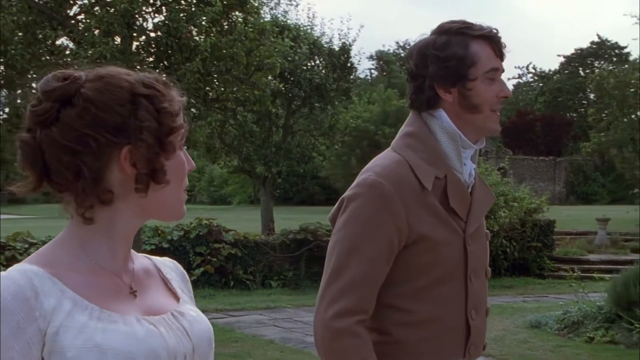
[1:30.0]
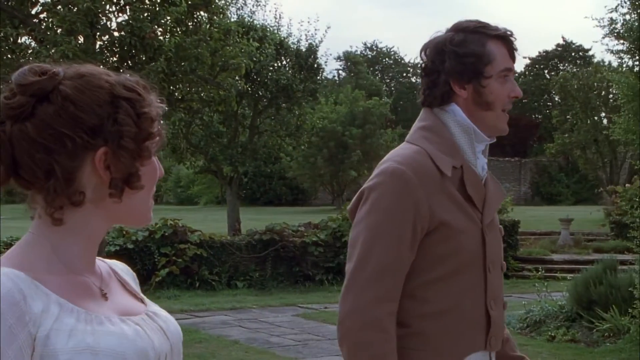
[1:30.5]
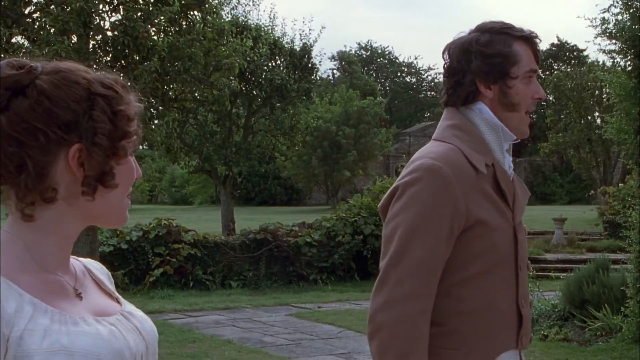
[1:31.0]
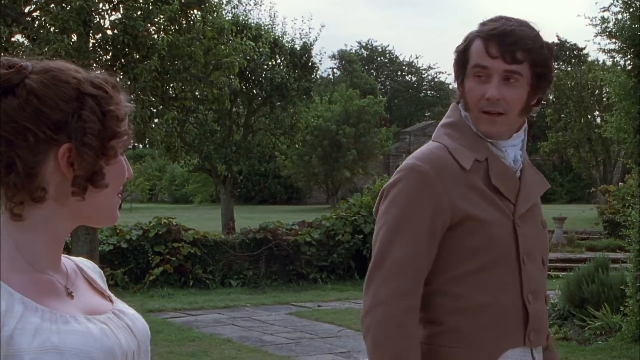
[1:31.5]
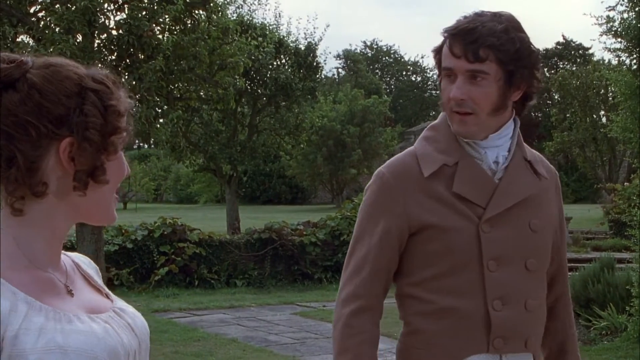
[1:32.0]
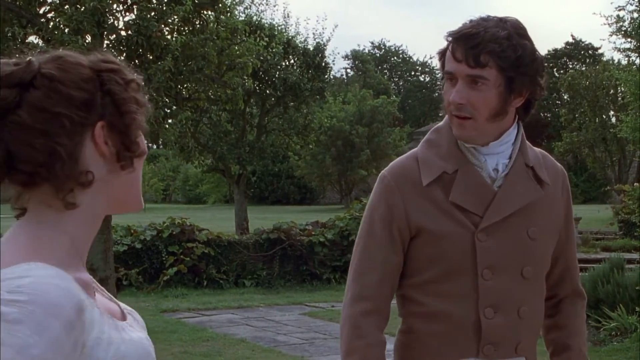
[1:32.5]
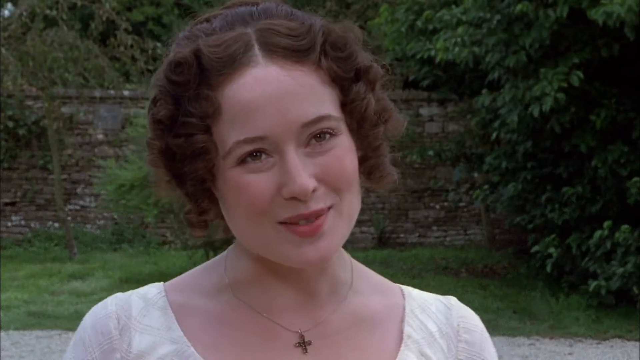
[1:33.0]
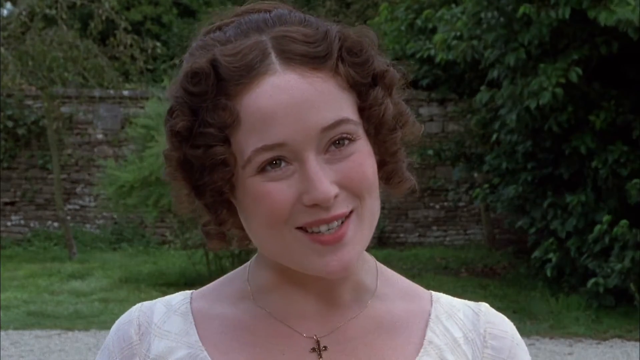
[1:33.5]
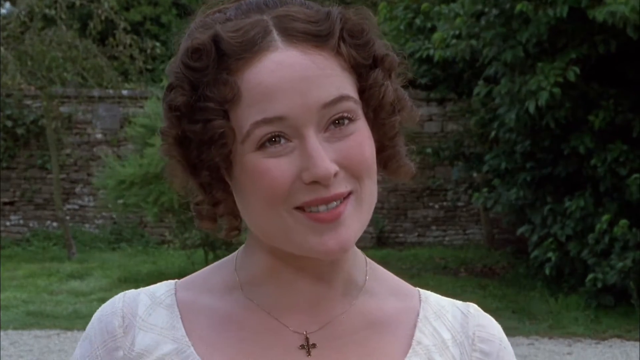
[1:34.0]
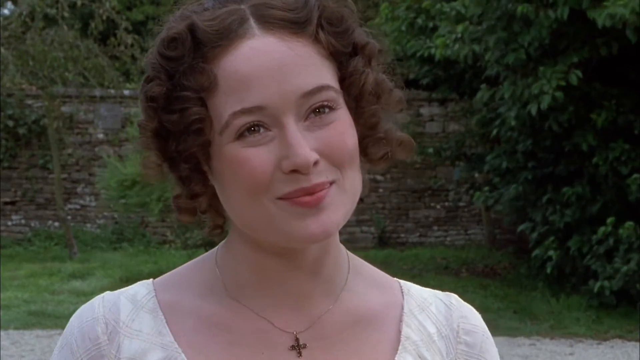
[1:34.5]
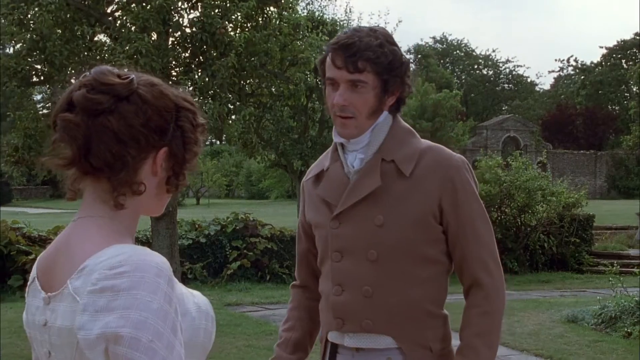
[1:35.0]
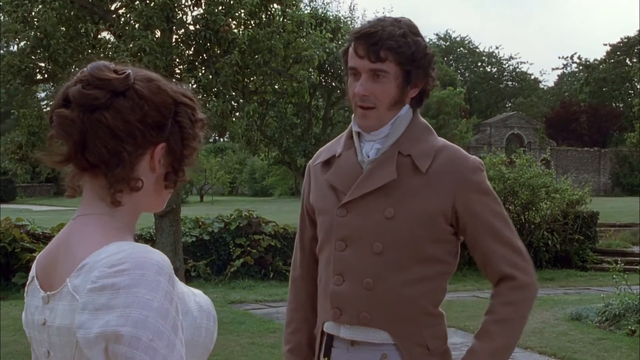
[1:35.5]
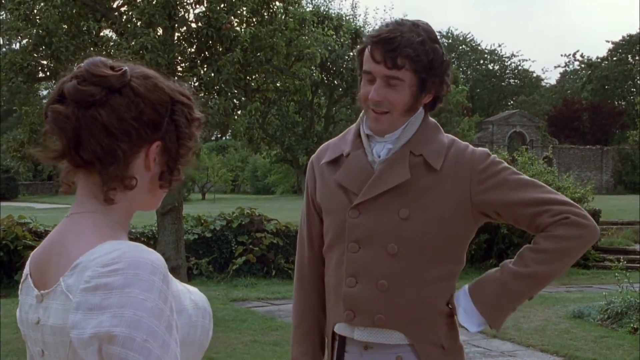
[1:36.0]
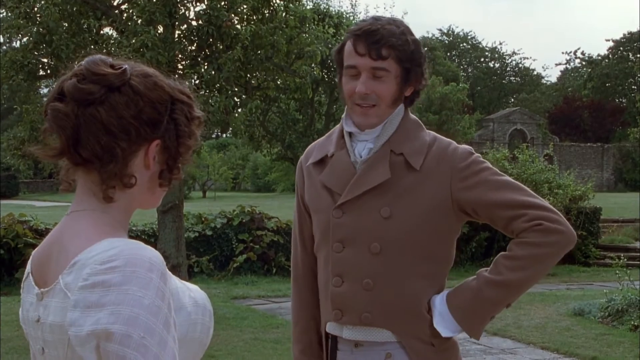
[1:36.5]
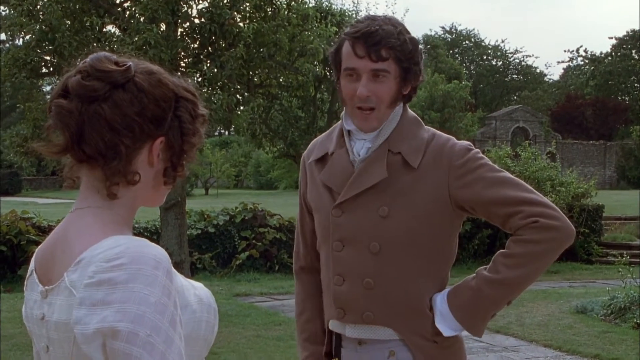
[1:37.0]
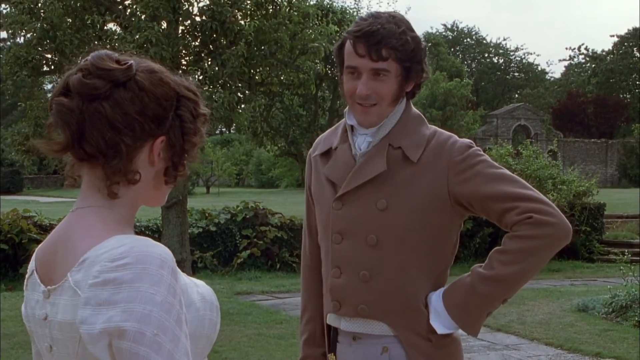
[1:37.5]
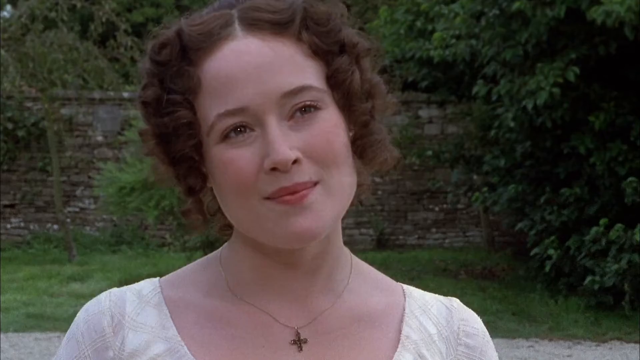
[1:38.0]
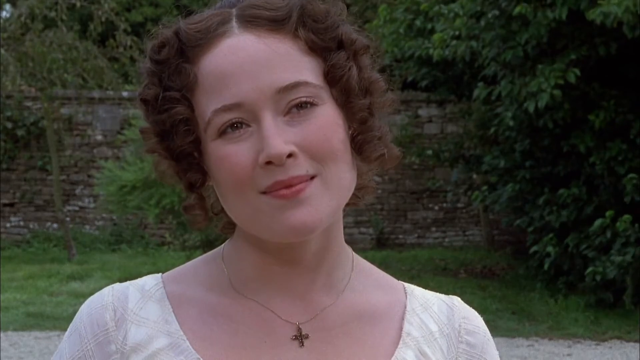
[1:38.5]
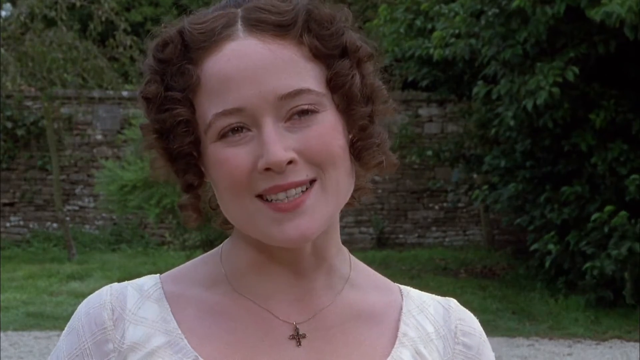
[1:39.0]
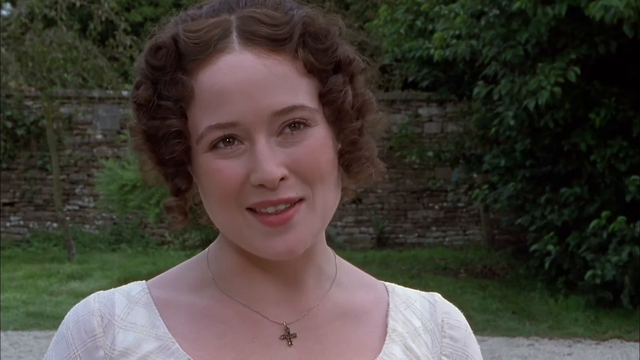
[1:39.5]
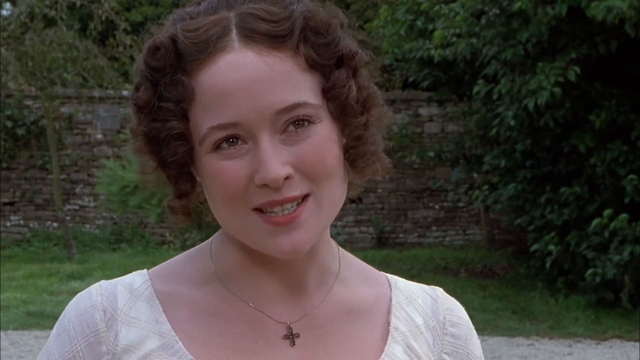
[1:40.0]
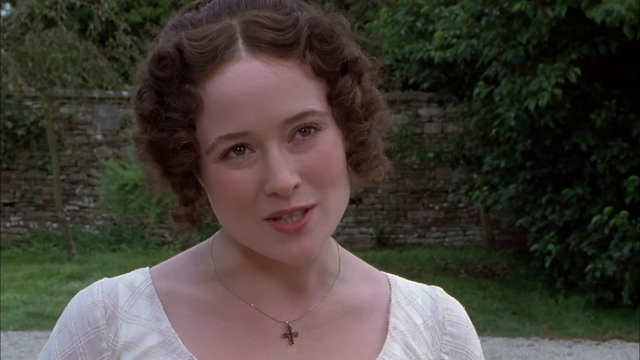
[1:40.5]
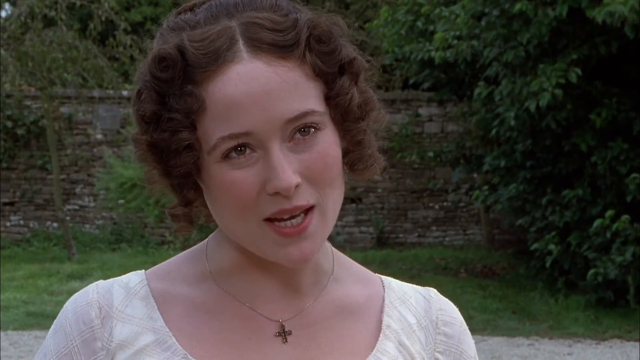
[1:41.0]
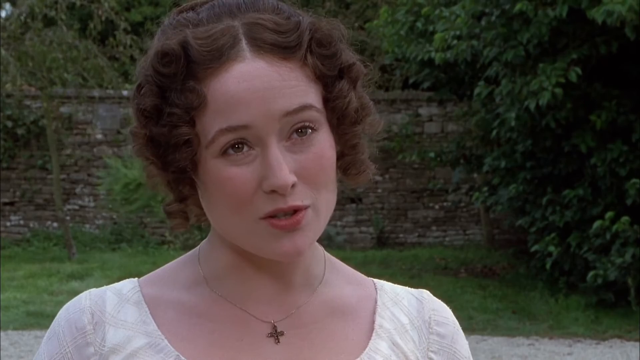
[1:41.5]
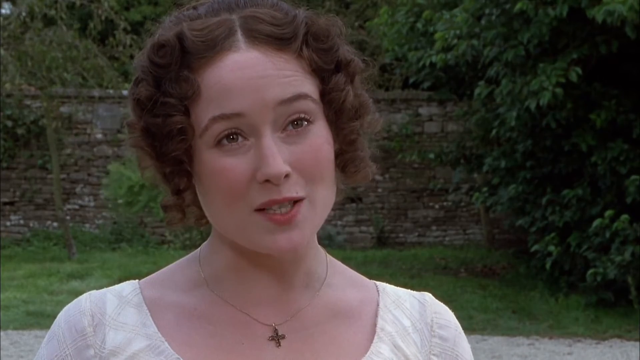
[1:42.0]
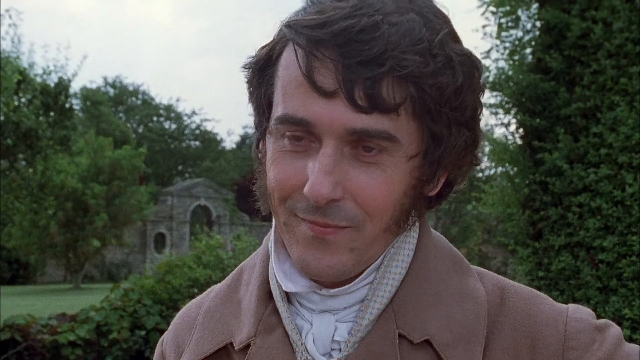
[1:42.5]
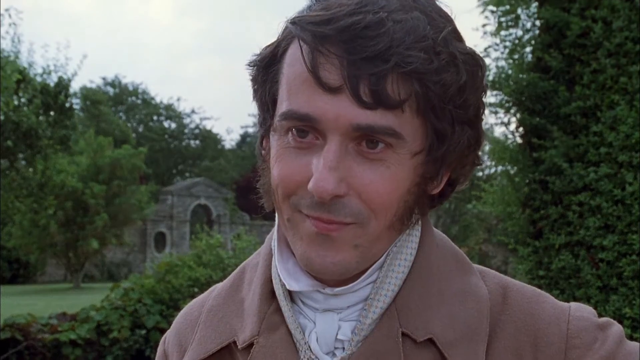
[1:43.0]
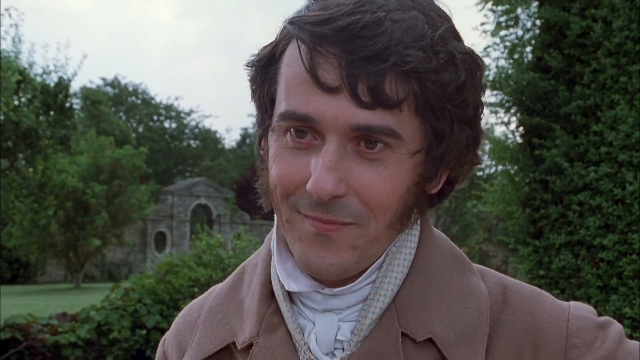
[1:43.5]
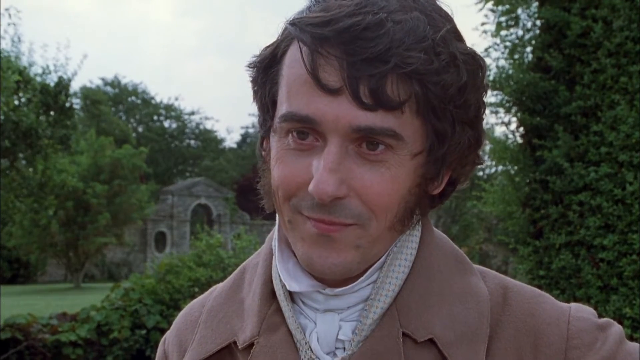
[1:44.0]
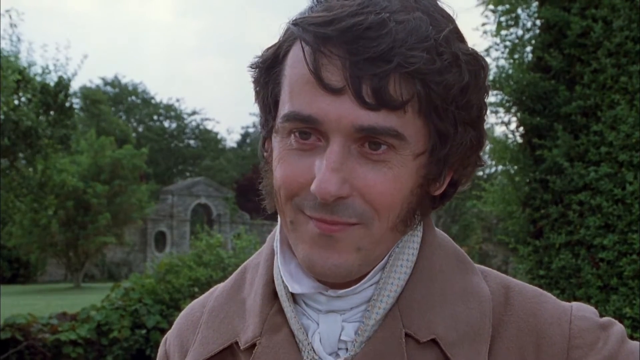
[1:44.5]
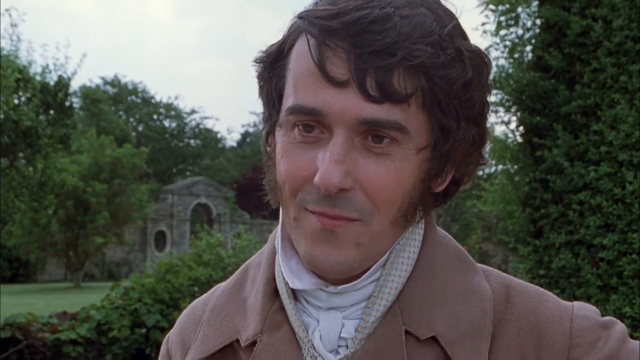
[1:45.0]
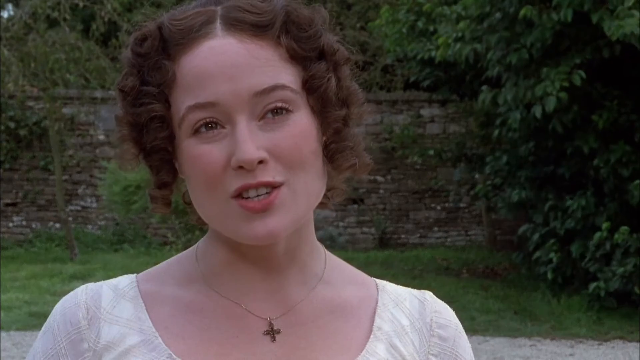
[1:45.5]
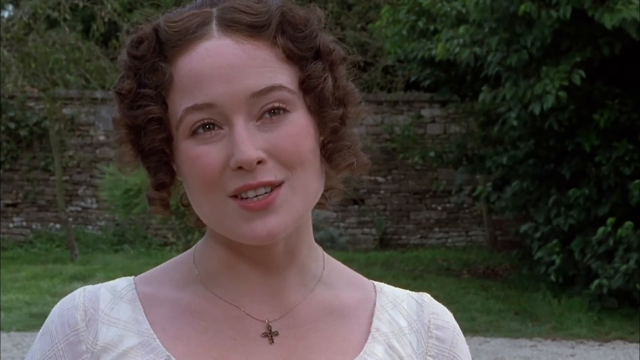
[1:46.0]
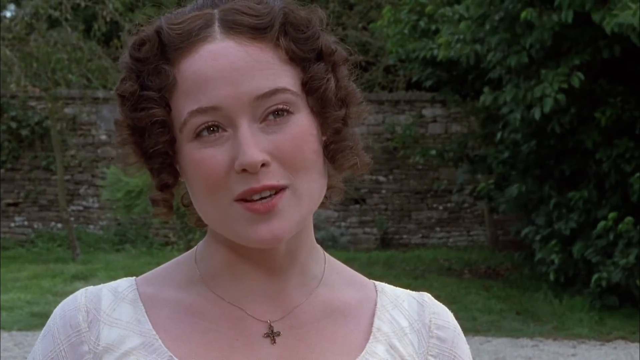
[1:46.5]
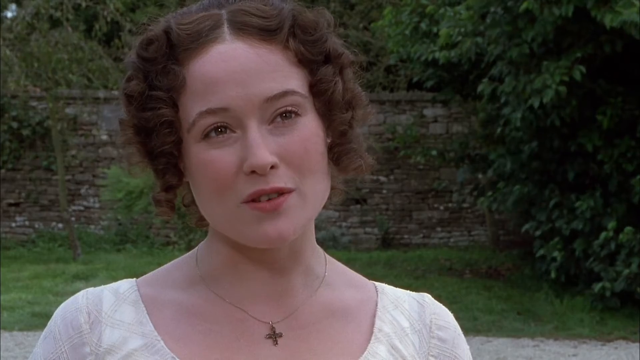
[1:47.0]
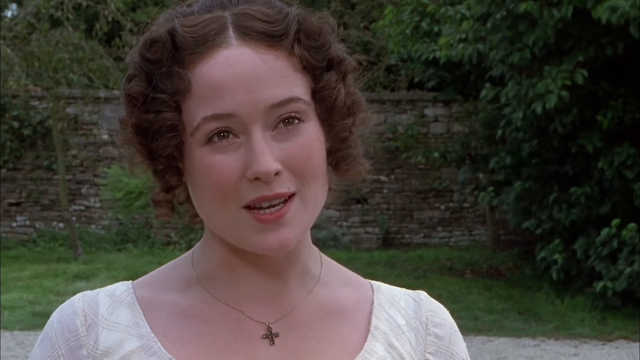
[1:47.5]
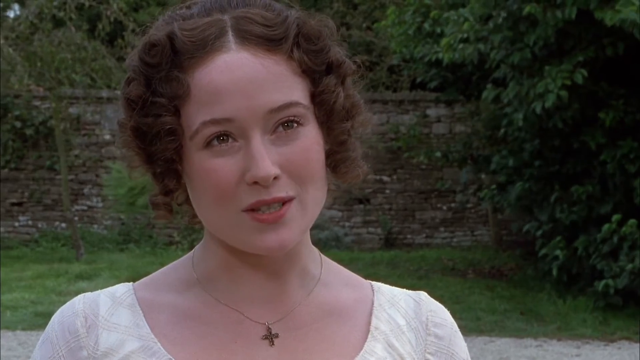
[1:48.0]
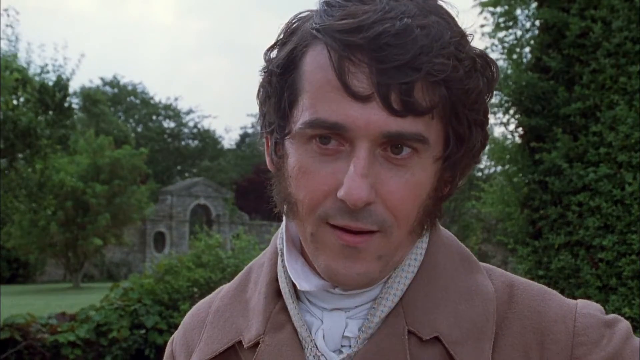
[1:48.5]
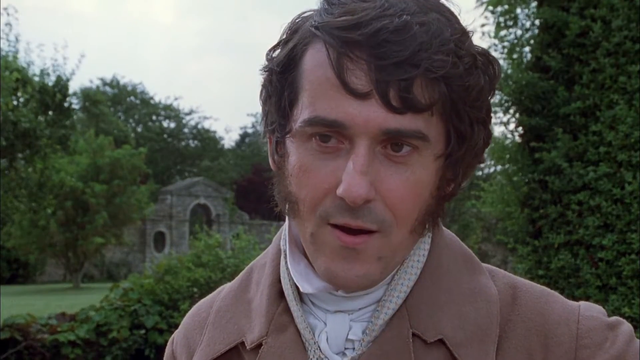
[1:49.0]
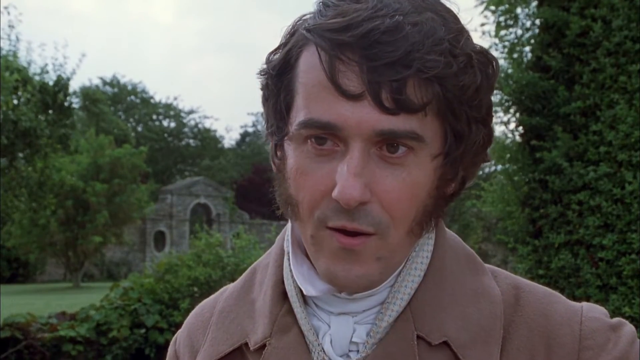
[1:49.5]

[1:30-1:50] The man and the lady, still in the garden, now look toward each other. The lady is smiling, and the man is kind of smiling too, with his left hand on his waist. It looks as if they are about to kiss, and they appear to be romantic partners rather than friends or relatives. No text appears on screen.